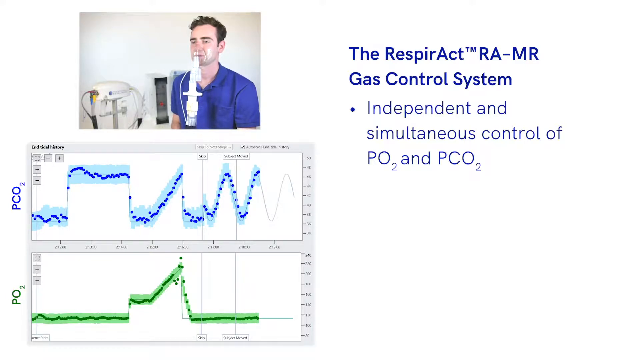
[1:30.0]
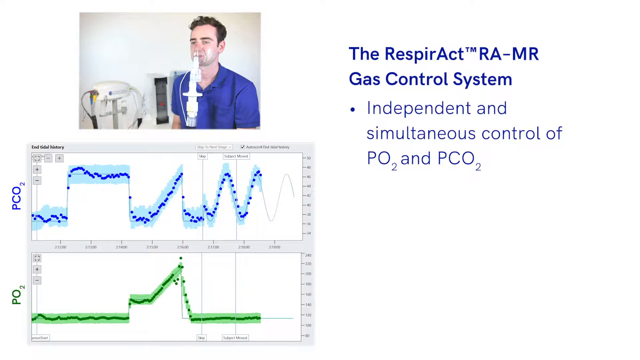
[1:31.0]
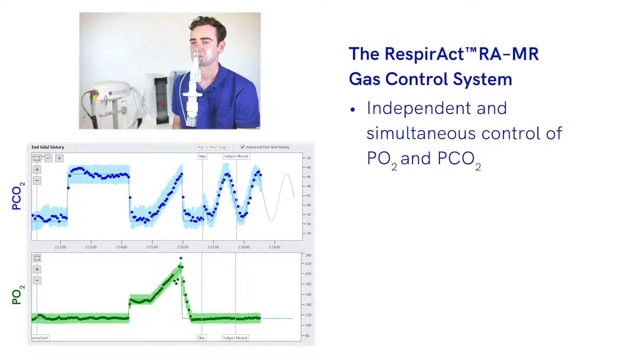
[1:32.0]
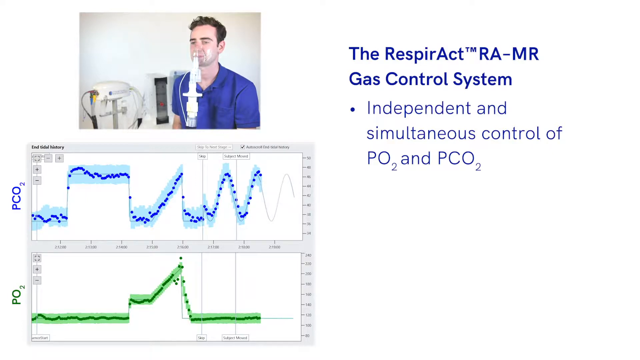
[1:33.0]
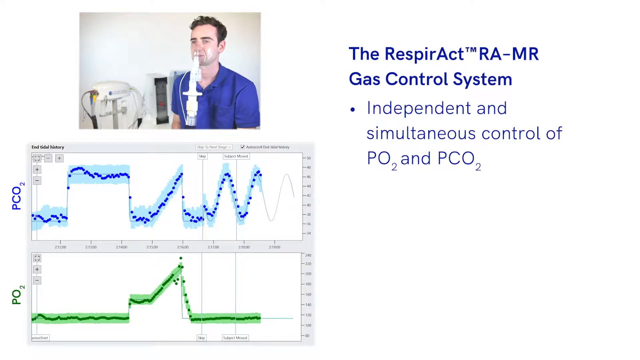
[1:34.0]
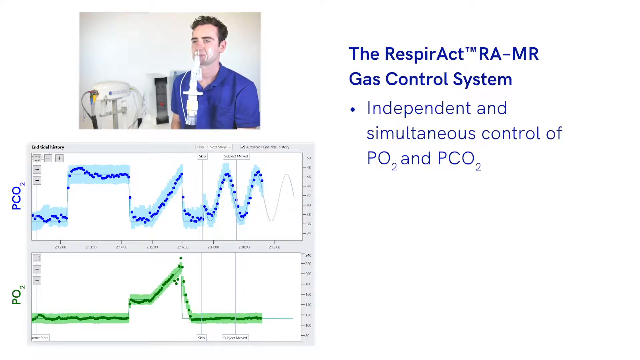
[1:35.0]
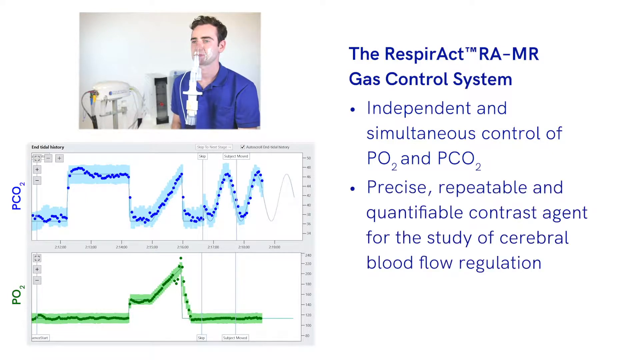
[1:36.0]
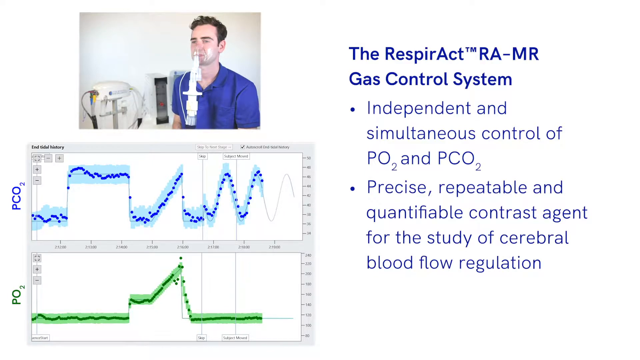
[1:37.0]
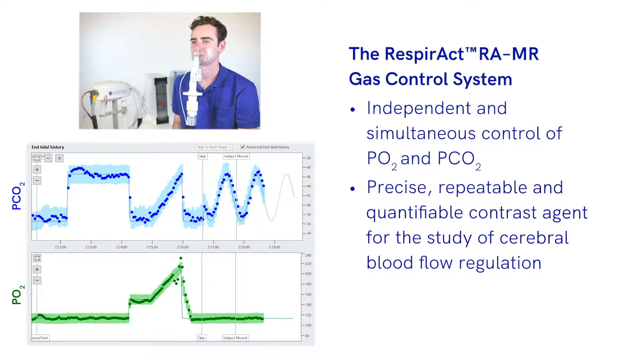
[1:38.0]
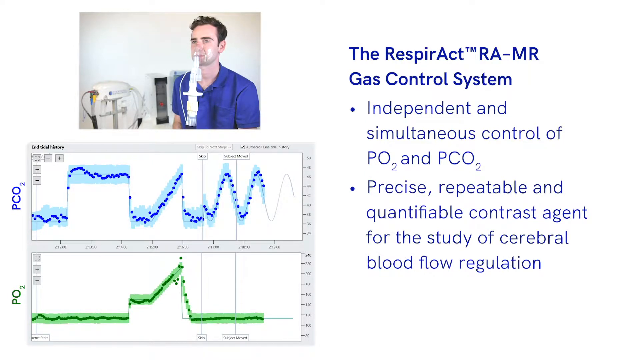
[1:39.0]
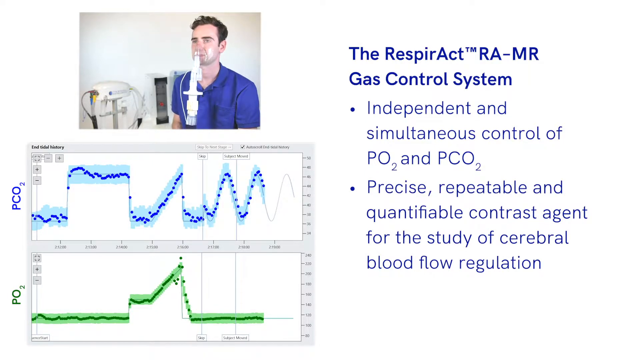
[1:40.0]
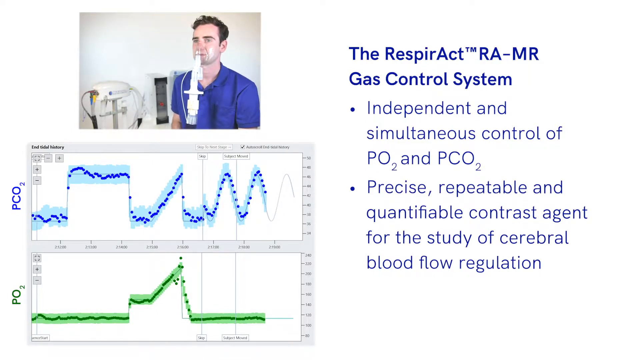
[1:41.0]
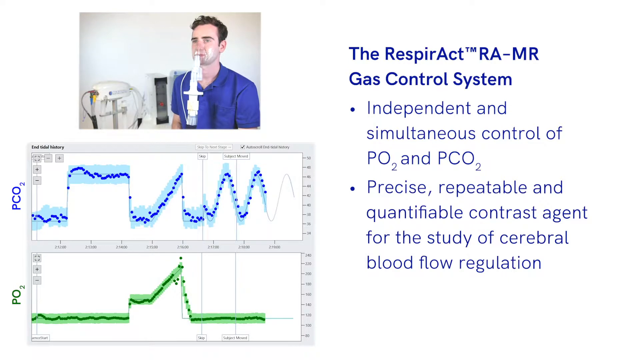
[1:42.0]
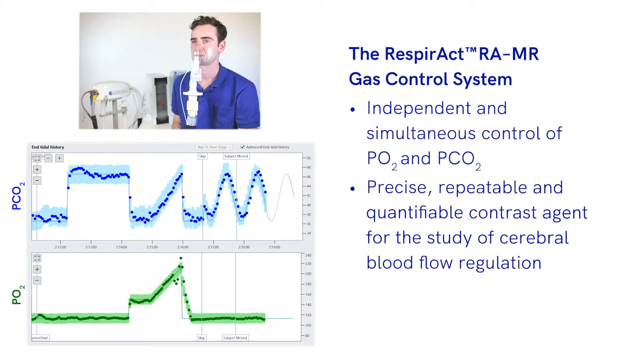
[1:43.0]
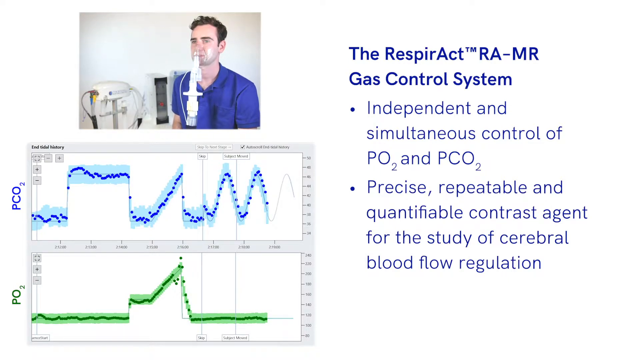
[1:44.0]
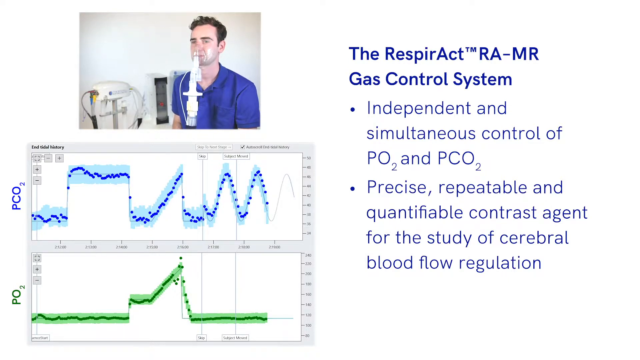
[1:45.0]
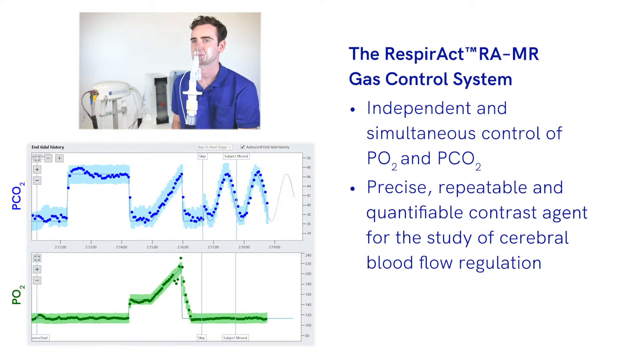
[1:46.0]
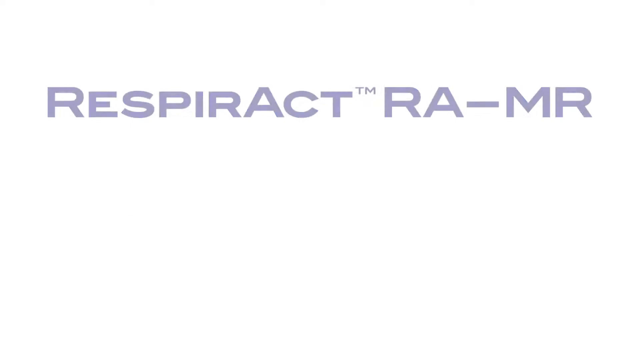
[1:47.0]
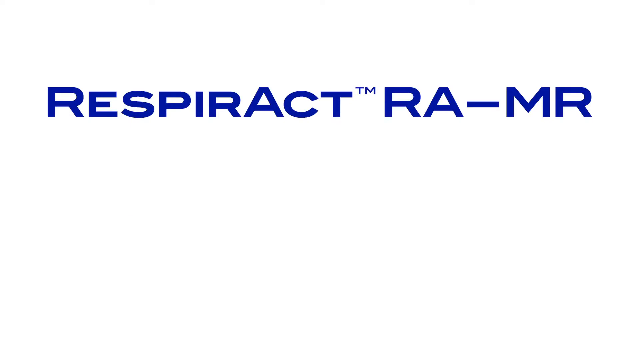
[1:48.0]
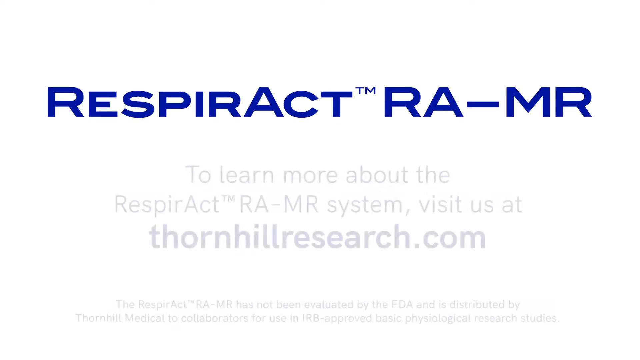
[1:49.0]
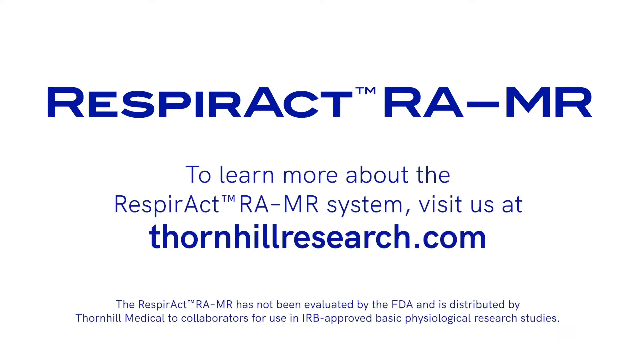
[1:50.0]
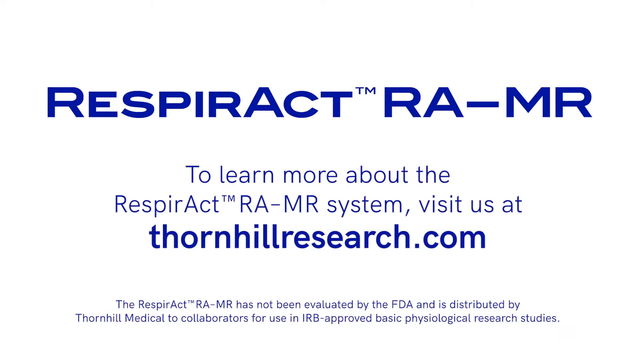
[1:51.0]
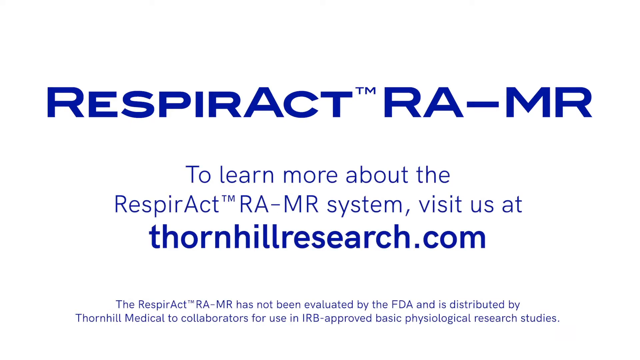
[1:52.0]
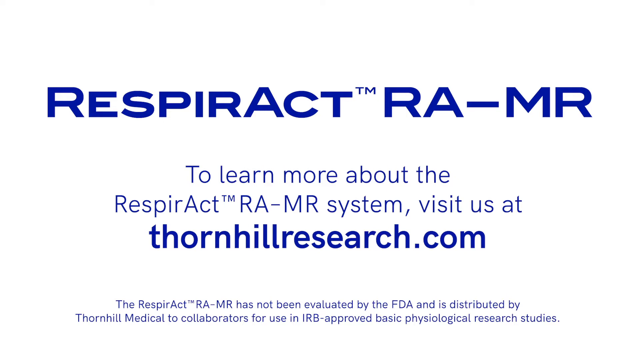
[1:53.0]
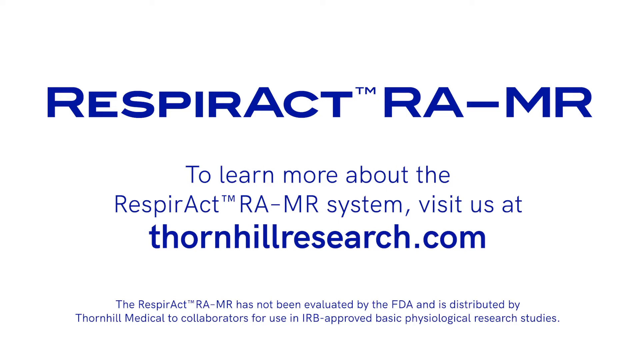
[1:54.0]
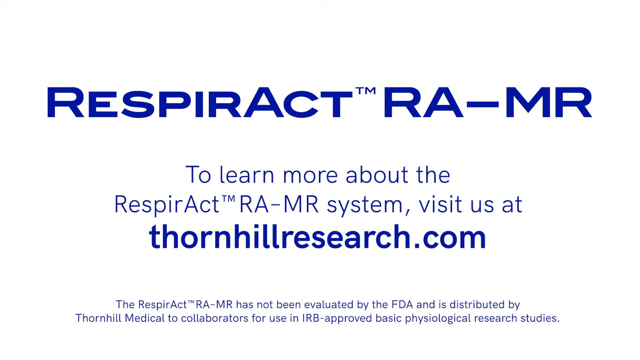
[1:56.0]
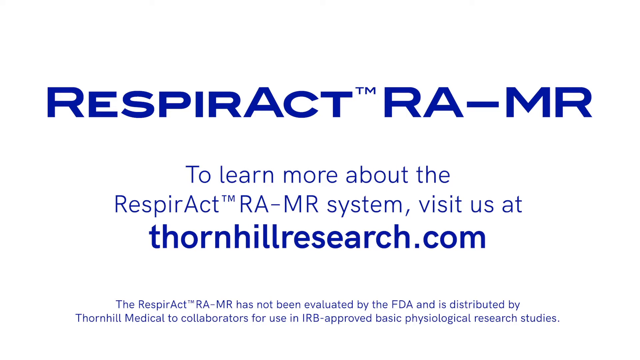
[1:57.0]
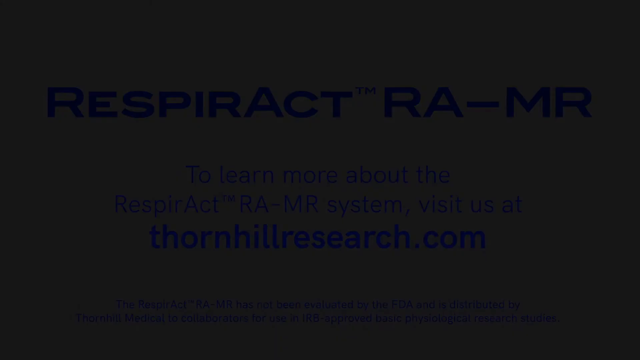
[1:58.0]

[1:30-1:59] Text about the Thornhill Research Respiract RA-MR gas control system reads "independent and simultaneously control of PO2 and PCO2" and describes it as a "precise, repeatable, and quantifiable contrast agent for the study of cerebral blood flow regulation." At the end of the video, text says "to learn more about the Respiract RAMR system, visit us at thornhillresearch.com." At the bottom, text says "the Respiract RAMR has not been evaluated by the FDA and is distributed by Thornhill Medical to collaborators for use in IRB-approved basic psychological research studies."